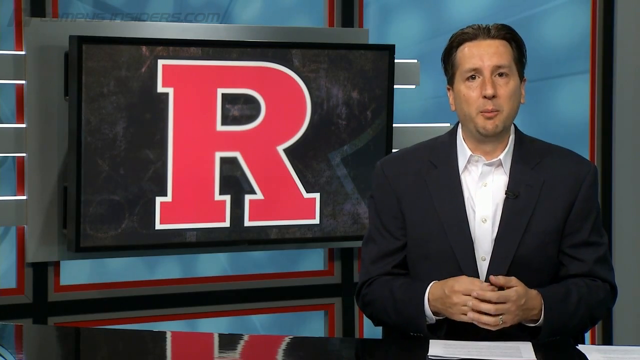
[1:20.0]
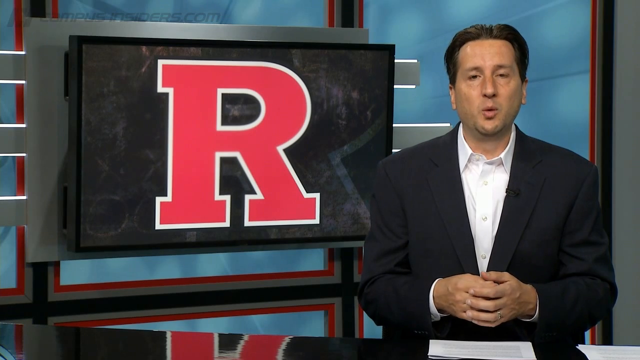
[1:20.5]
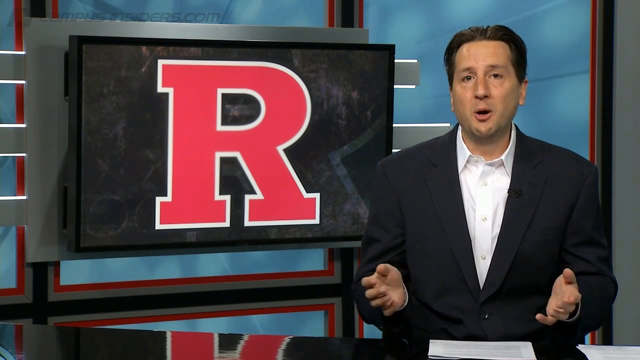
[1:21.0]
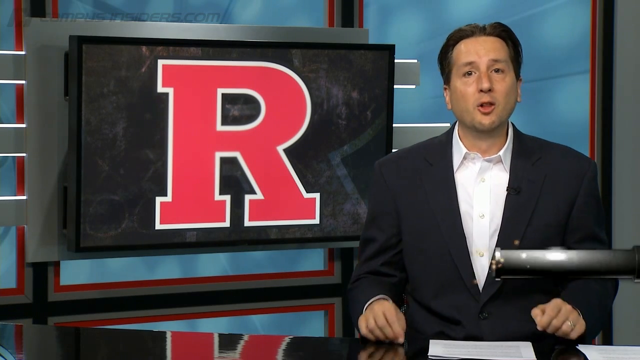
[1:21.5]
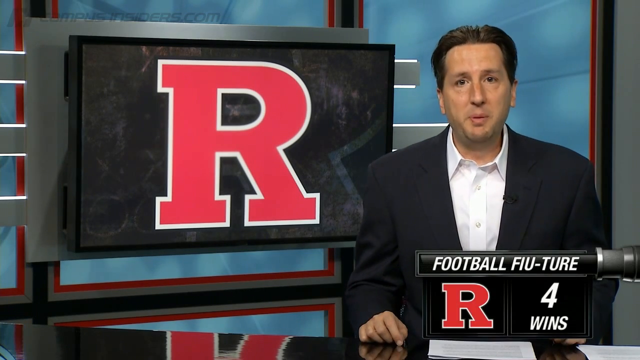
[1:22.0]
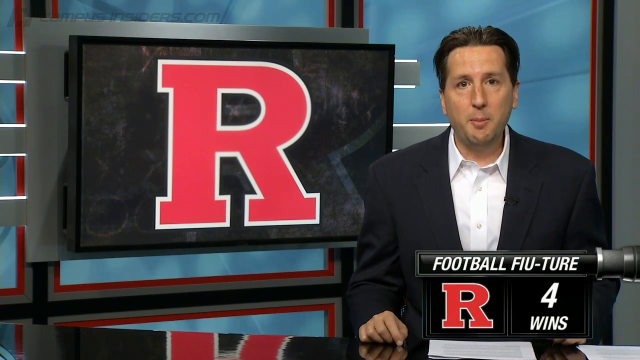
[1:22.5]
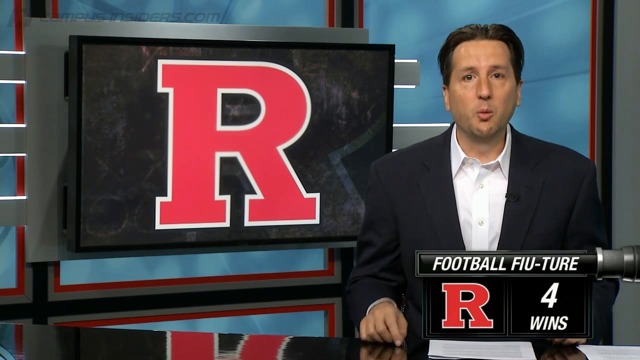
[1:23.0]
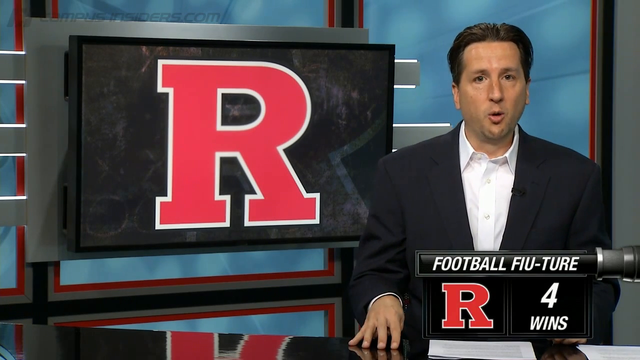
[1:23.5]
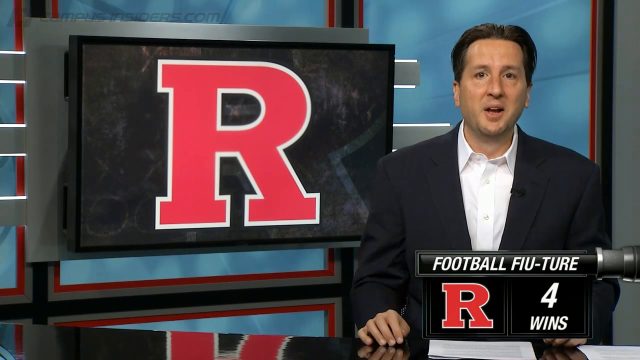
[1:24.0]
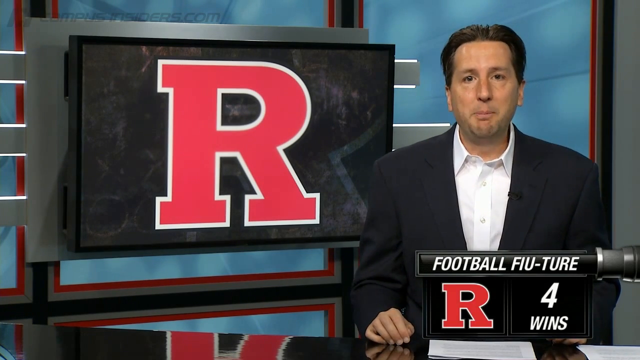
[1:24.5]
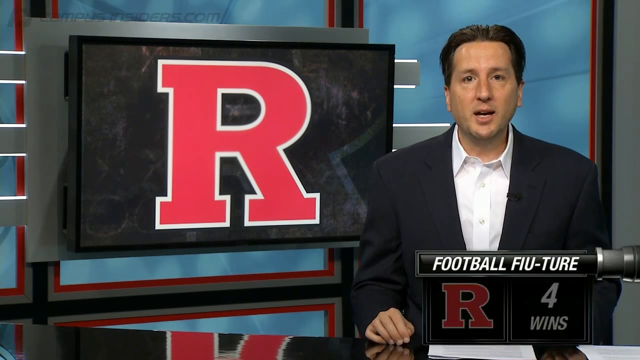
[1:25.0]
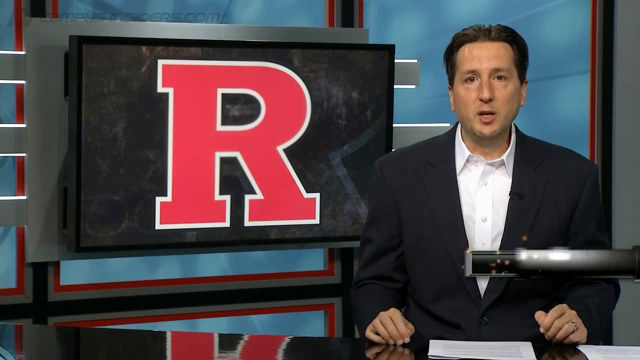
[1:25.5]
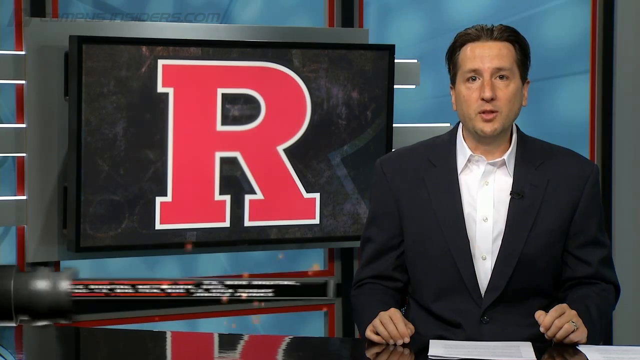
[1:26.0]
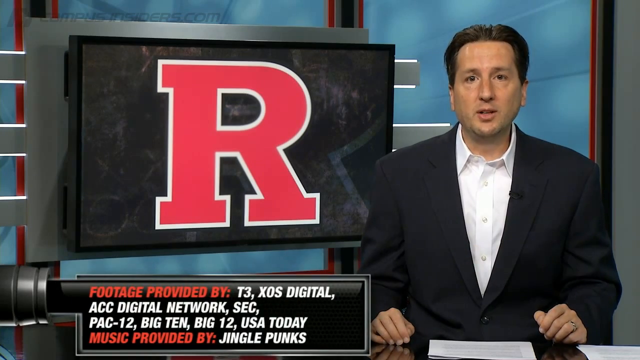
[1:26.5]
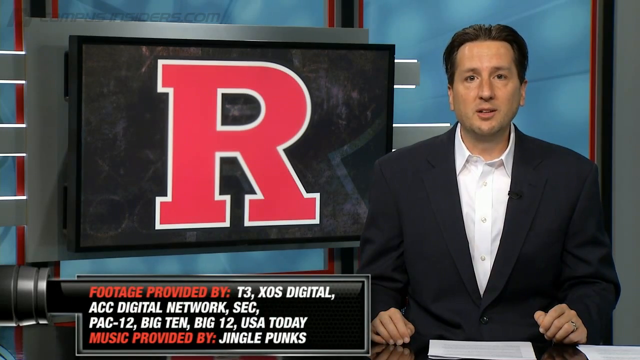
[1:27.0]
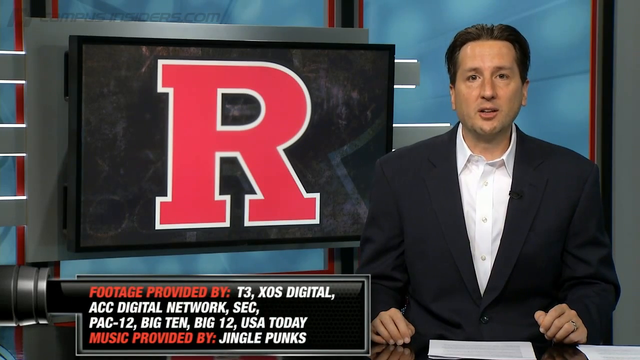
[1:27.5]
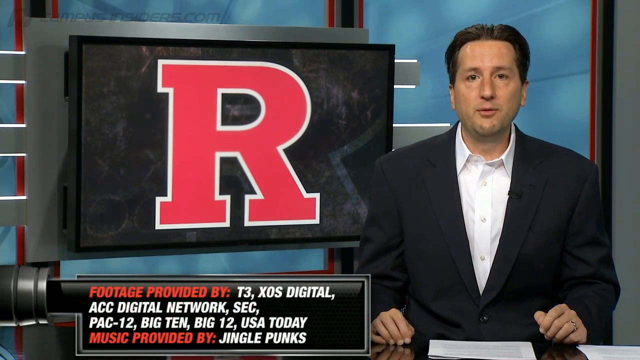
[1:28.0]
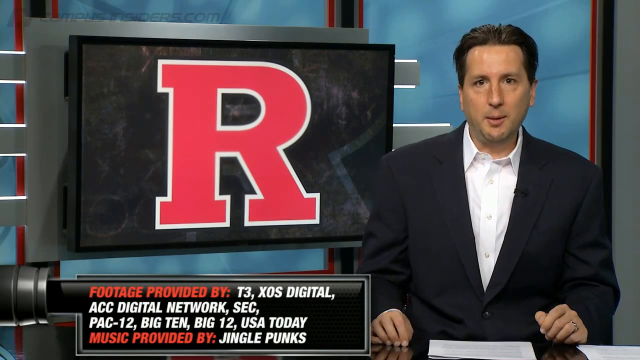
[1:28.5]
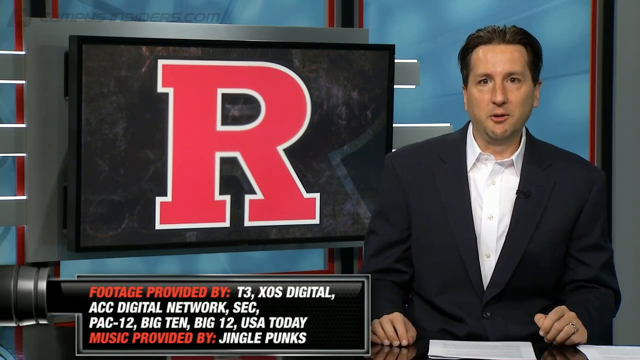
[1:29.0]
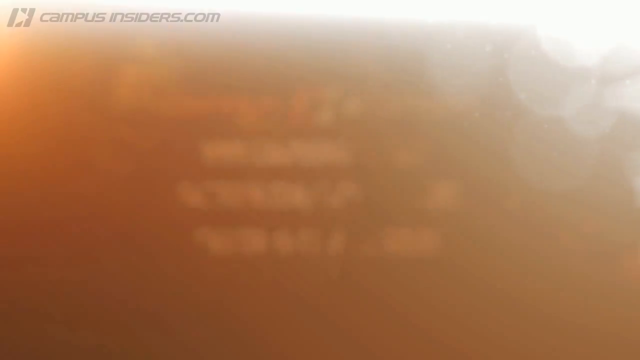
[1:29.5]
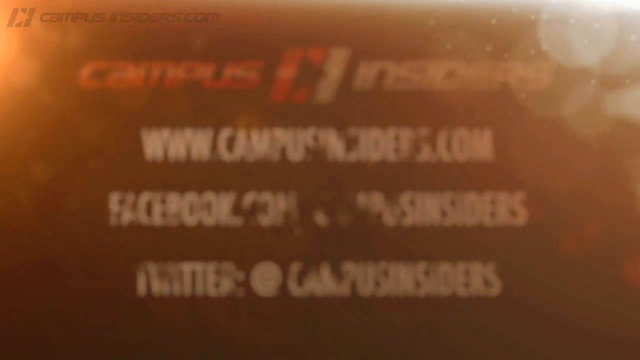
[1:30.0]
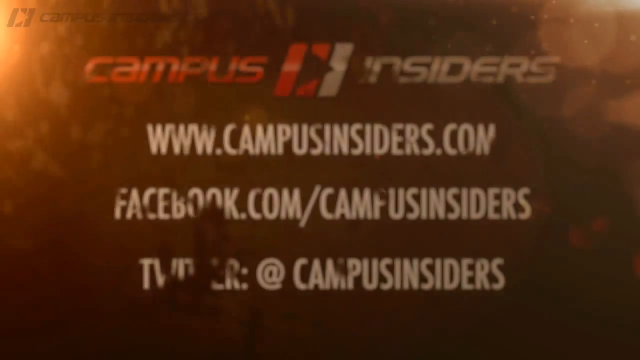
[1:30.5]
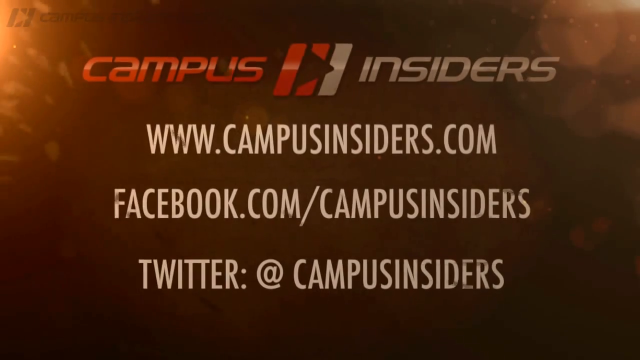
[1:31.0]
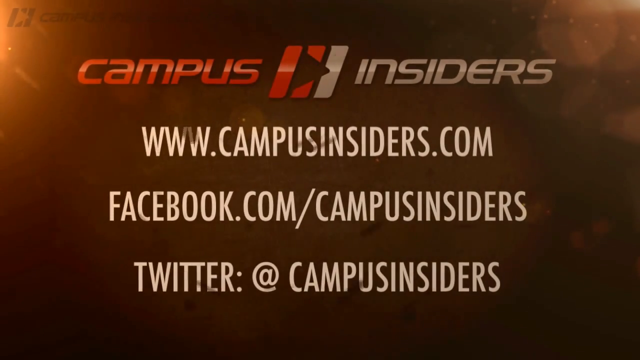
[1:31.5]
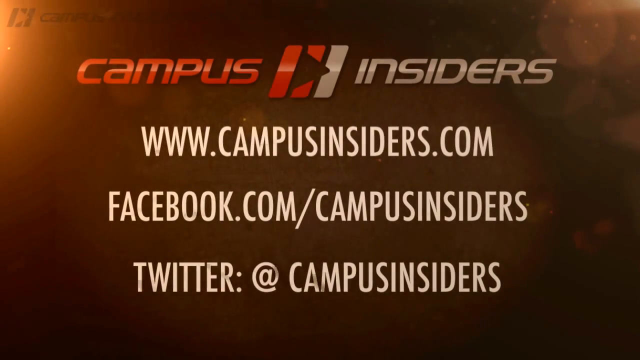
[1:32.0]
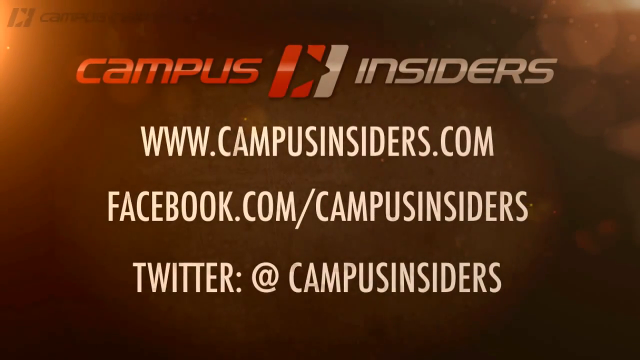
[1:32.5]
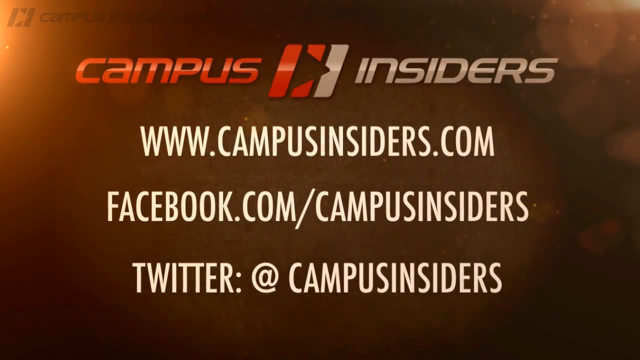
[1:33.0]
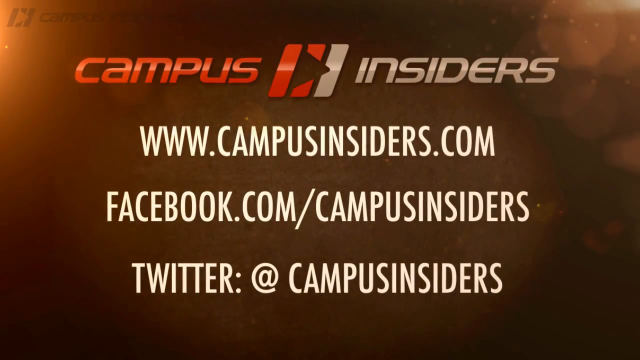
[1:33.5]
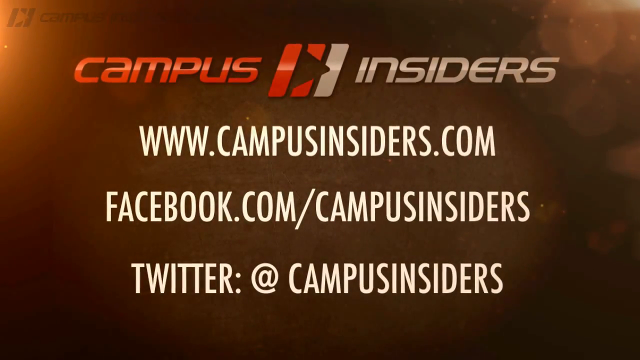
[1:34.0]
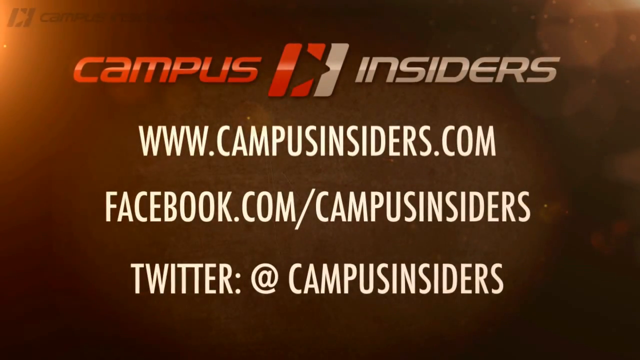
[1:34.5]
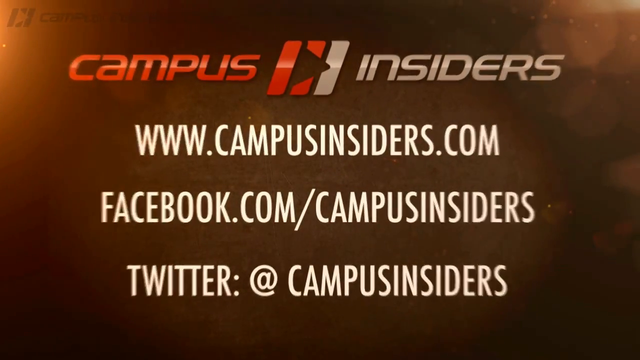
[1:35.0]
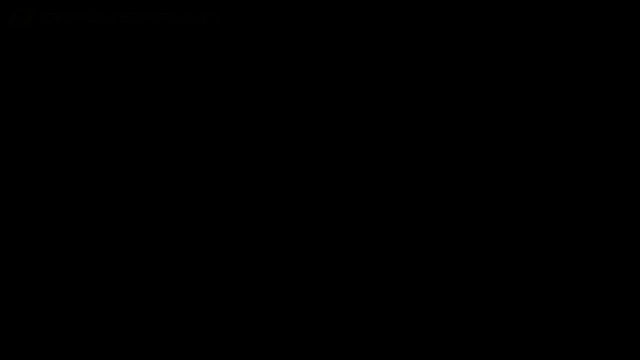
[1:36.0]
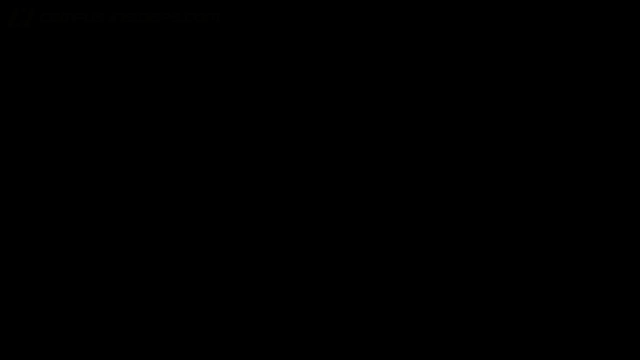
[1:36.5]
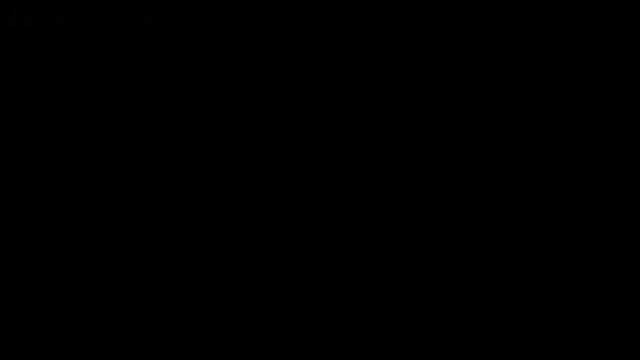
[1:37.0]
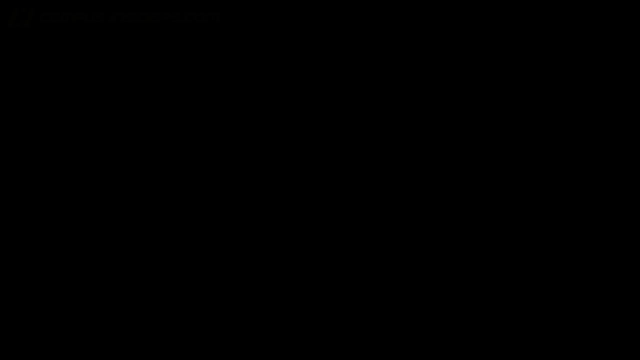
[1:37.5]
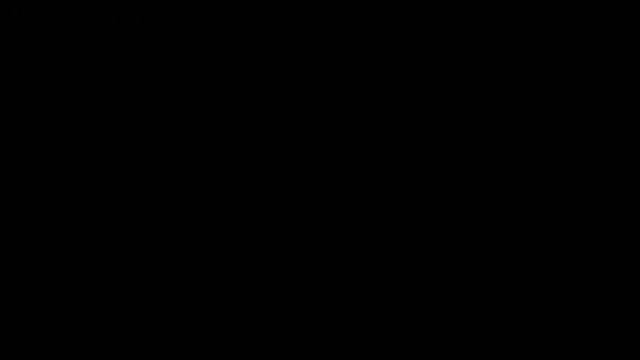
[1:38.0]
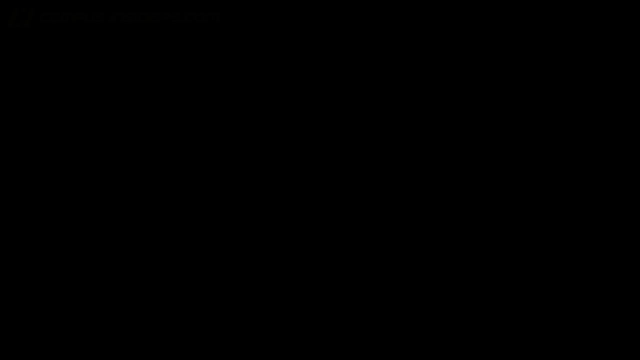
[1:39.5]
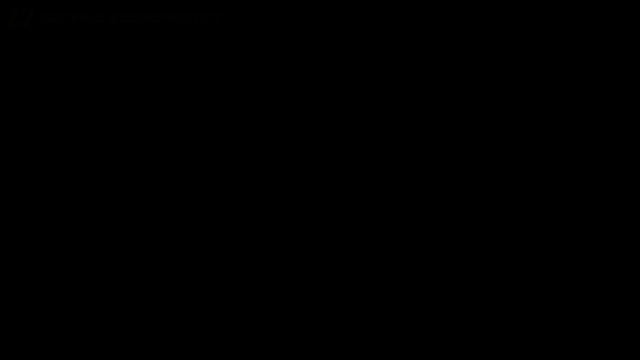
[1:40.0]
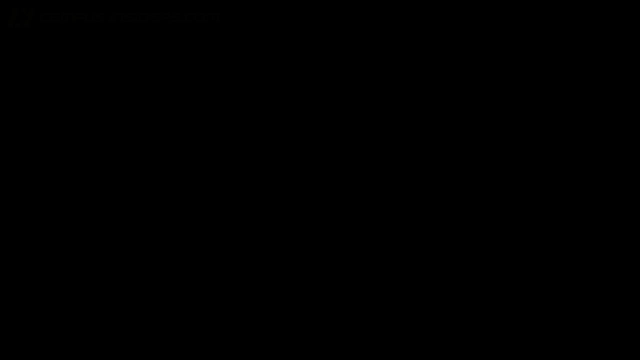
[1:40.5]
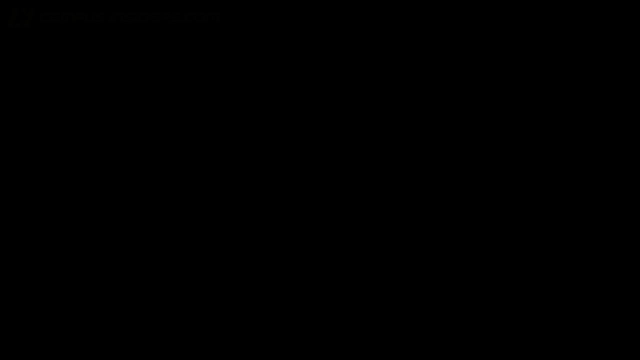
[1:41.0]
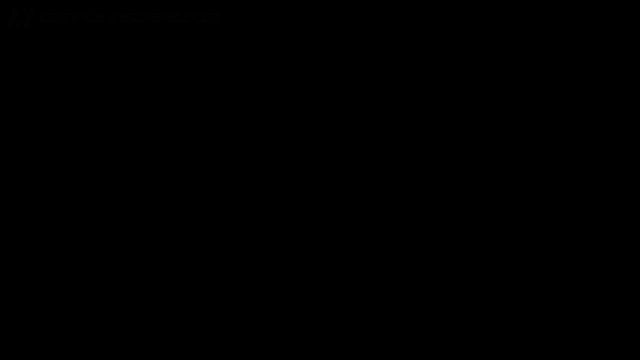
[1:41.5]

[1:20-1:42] The sportscaster continues to talk and gesture on the right of the screen, with the Rutgers logo on the television screen hanging in the studio on the left. He wears a fully long-sleeved black blazer that is a little bit oversized, and a white dress shirt with the collar tucked into the jacket and the top button undone. He has a microphone on his lapel, and his hair is somewhat slicked back with gel. At the bottom right of the screen a graphic appears reading "Football Future," spelled F-I-U-T-U-R-E with a dash, with the Rutgers logo below it in a small left panel and a small right panel beside it reading "Four Wins." The sportscaster emphasizes his points by placing his hands on the desk. Credits for who provided the footage and the music for the segment appear at the bottom left of the screen. The video cuts to a final full-screen splash screen with the Campus Insiders logo: "Campus" in red and "Insiders" in a light gray, almost white color, with a logo that looks like a play button between the words. Underneath is "www.campusinsiders.com" in all caps, followed by a facebook.com/campusinsiders URL and a Twitter handle for Campus Insiders.